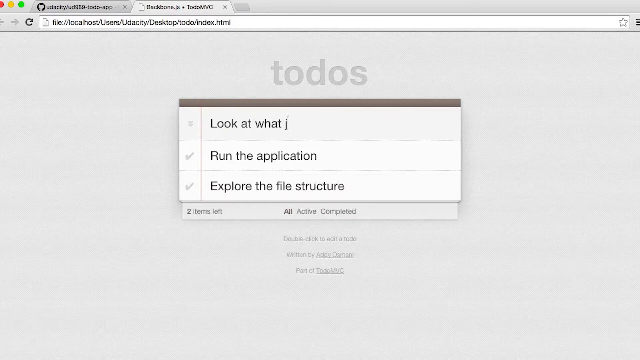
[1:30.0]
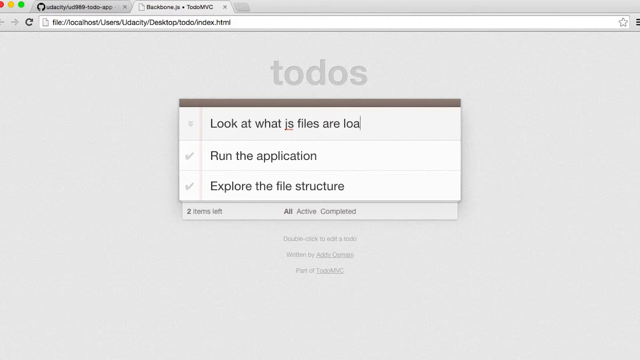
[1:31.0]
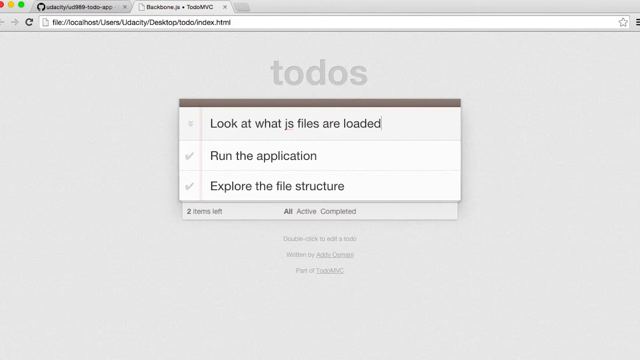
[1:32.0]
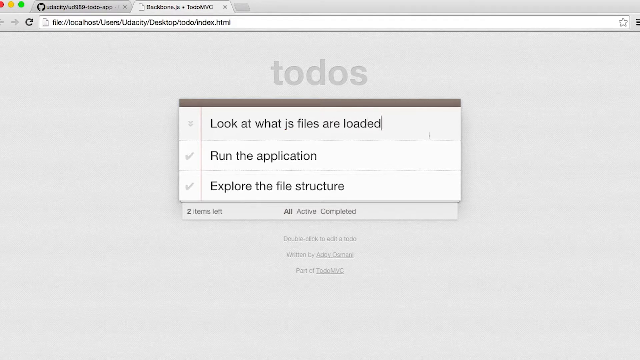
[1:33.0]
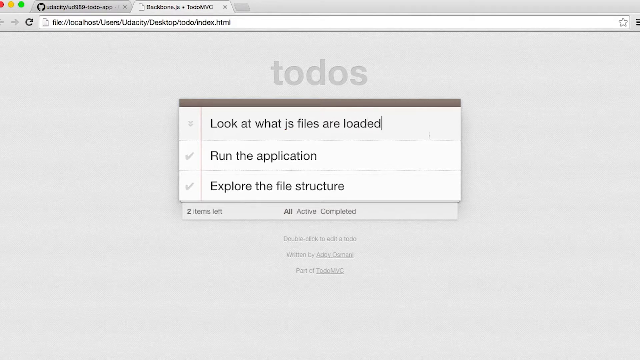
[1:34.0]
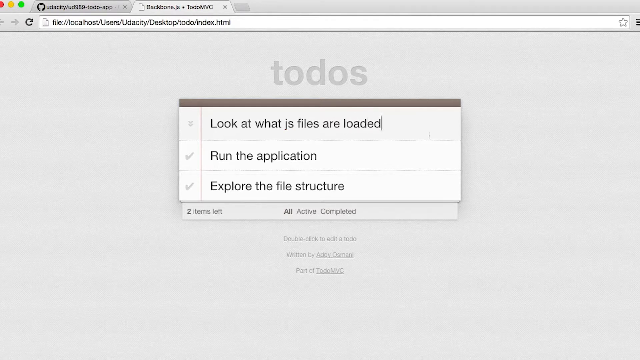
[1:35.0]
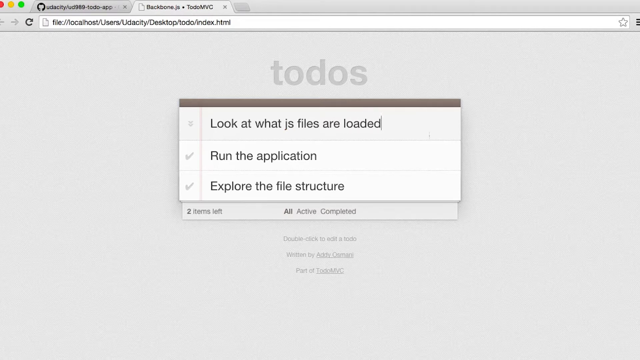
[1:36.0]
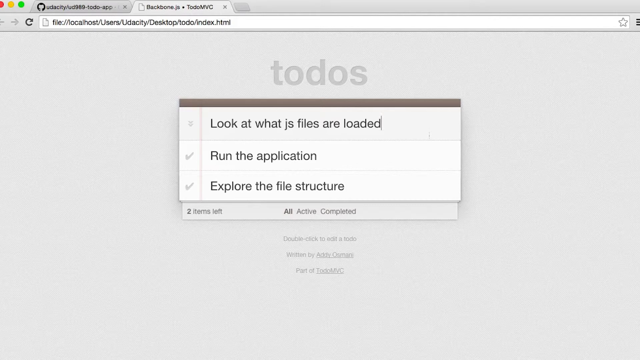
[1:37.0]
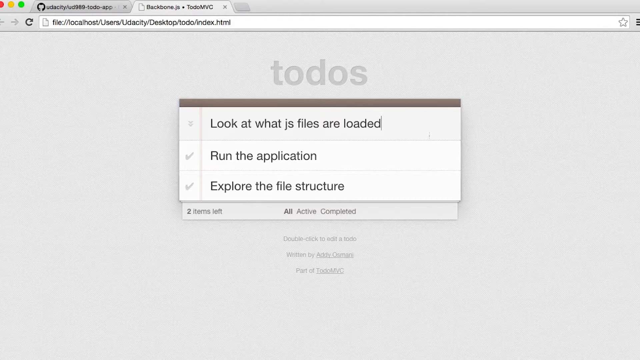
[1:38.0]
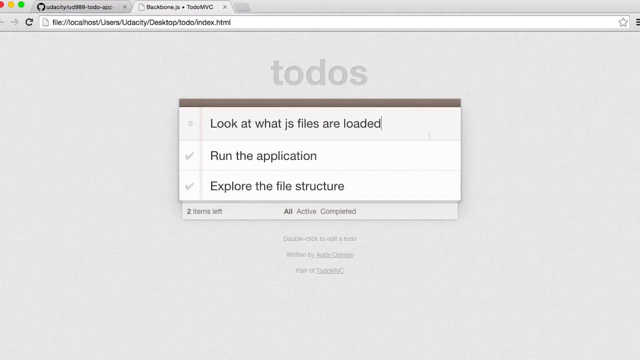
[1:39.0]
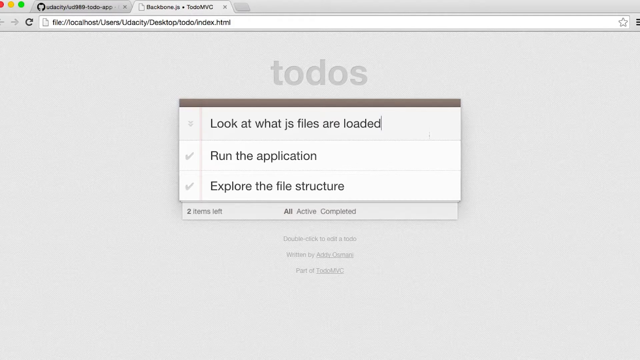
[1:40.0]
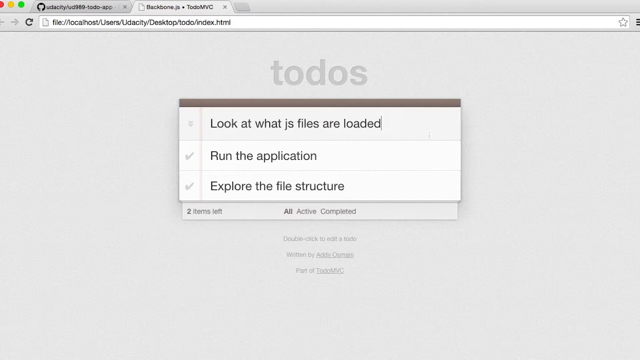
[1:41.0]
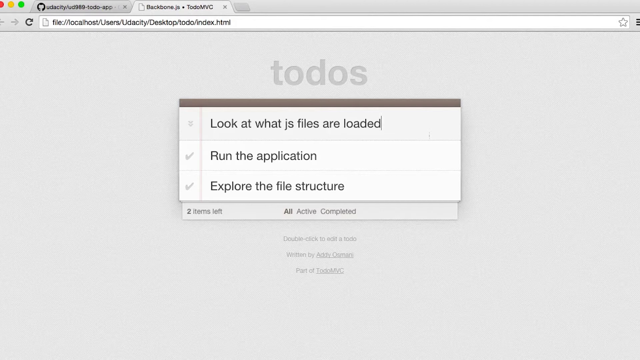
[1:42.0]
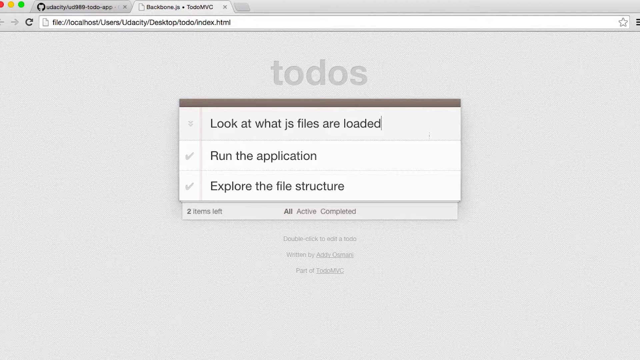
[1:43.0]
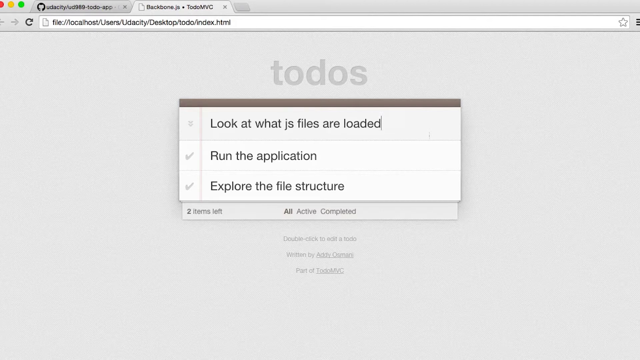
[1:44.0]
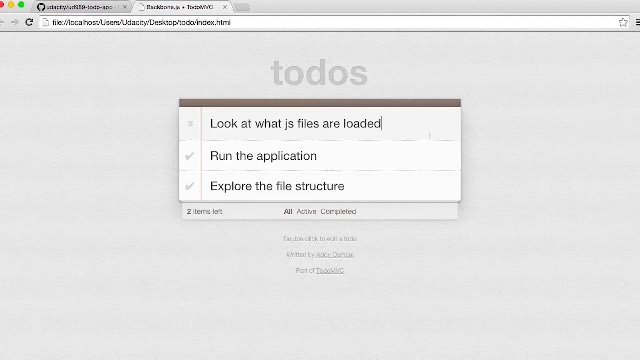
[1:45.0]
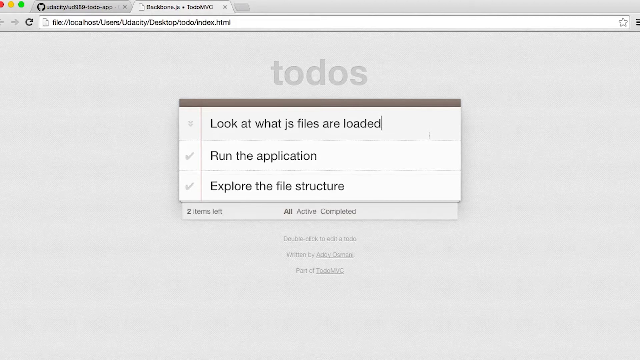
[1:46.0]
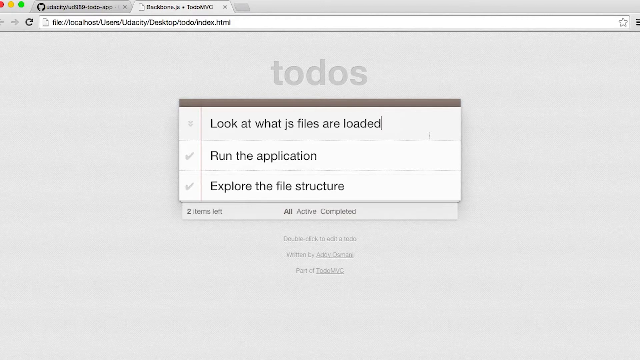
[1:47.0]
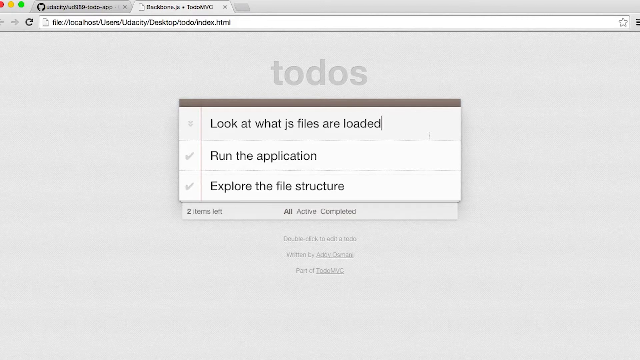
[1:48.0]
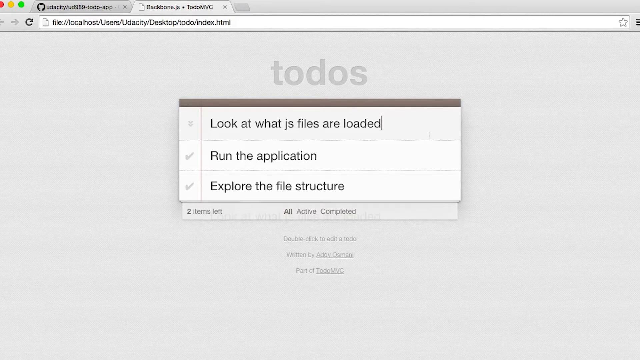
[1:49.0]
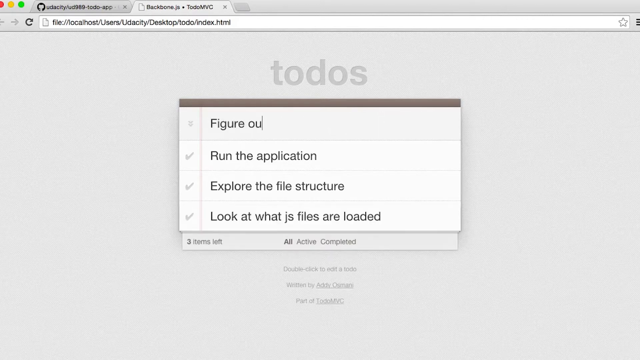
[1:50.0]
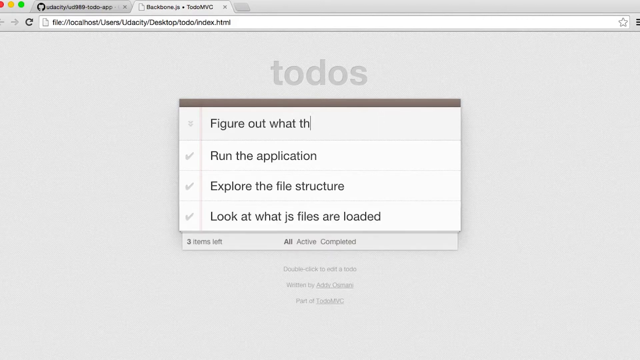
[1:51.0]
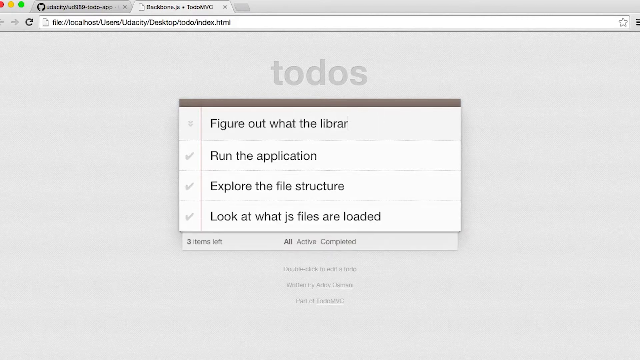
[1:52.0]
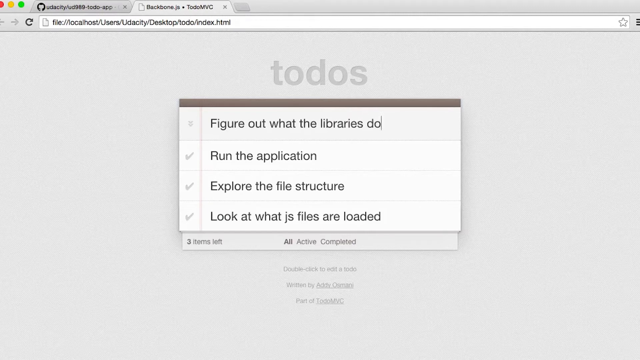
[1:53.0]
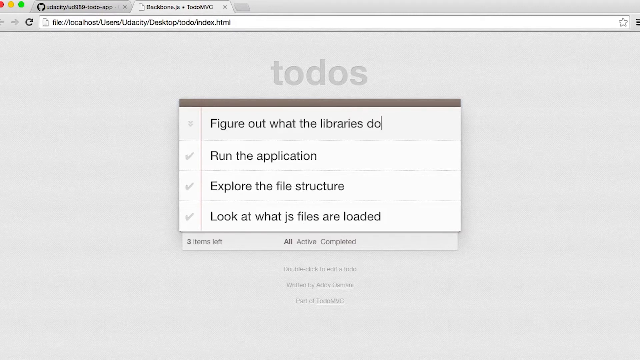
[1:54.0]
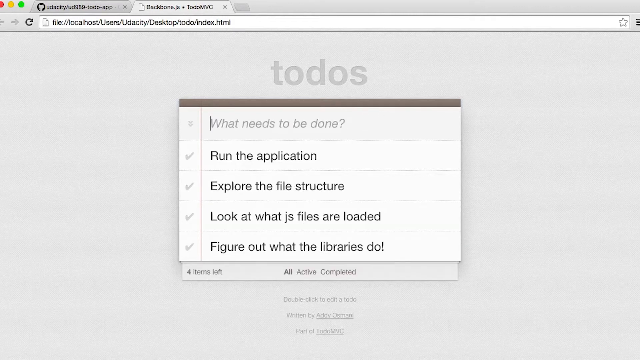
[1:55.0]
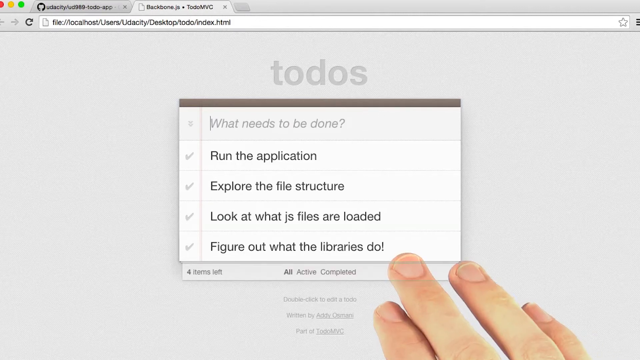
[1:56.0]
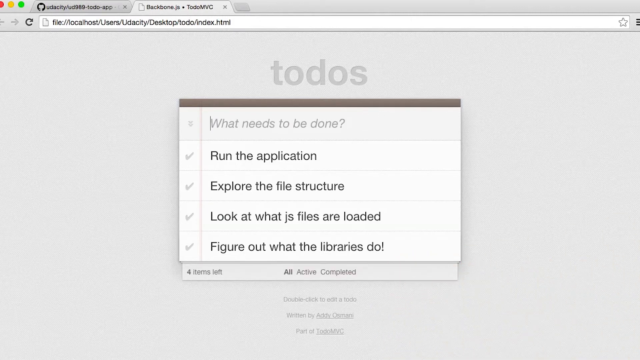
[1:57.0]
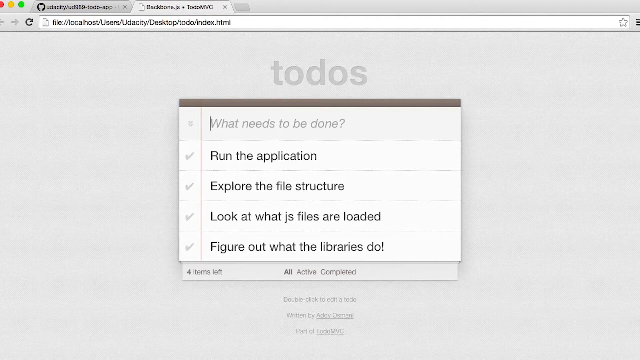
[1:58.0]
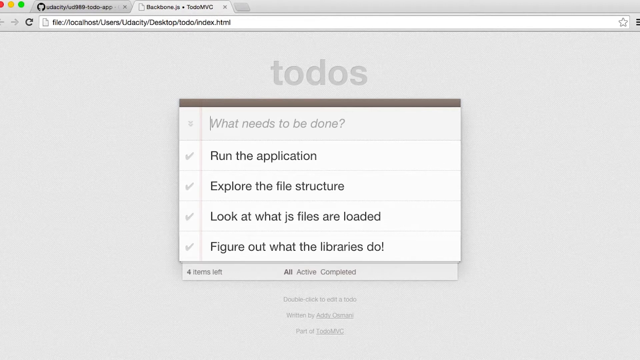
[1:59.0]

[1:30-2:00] The browser remains open with both tabs, one to GitHub and the other to the localhost file where text is being typed. The words "look at what js files are loaded" are typed in the typable line below the to-dos. Below that are the sentences for the application, and below that sentence is "Explore File Structure". Nothing appears to be typed for about 10 seconds. Then the sentence "figure out what the libraries do!", with an exclamation point at the end, is typed. As it finishes being typed, a hand appears and points at that sentence line. Then another hand appears on the right side with what appears to be a pen, pointing at the file. Below the typable sentence box, the bottom left says "two items left" and the bottom middle says "all active completed".